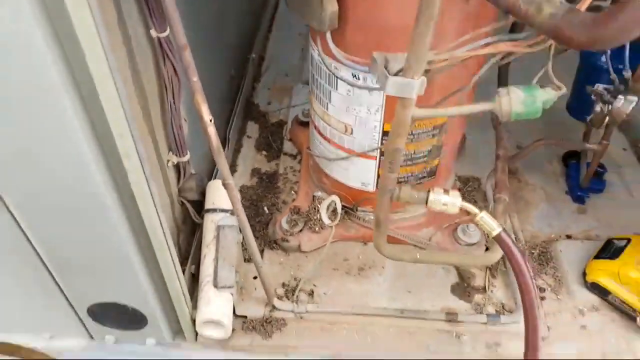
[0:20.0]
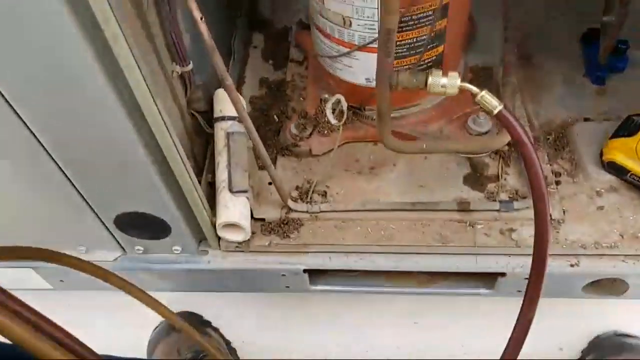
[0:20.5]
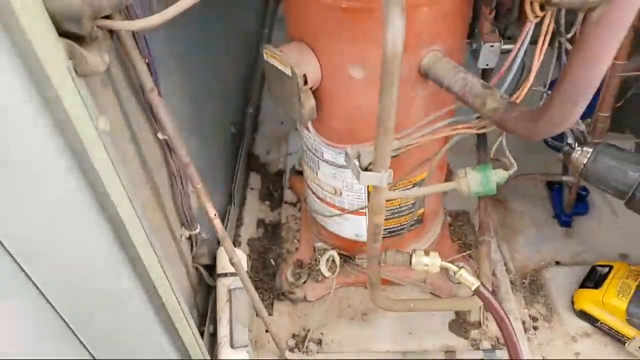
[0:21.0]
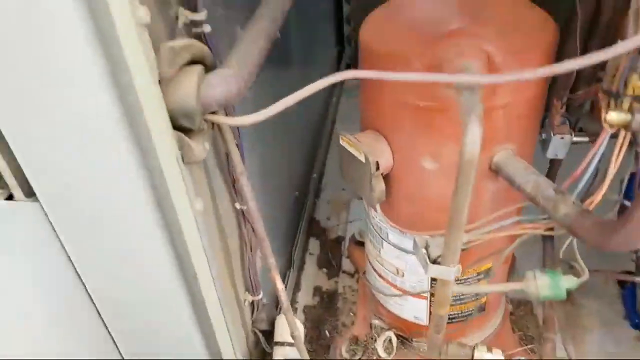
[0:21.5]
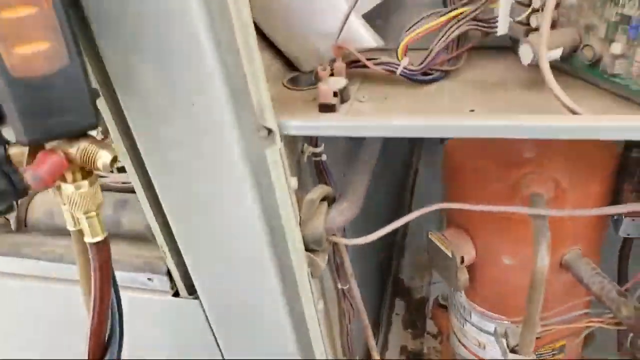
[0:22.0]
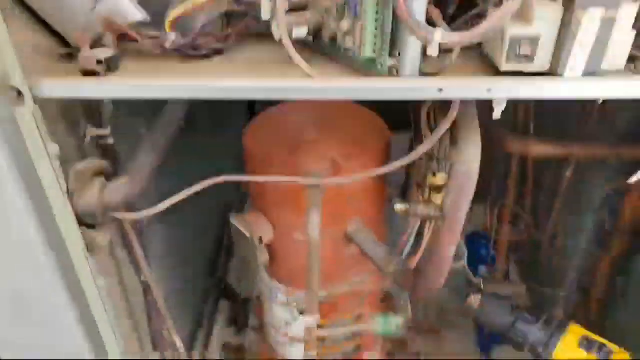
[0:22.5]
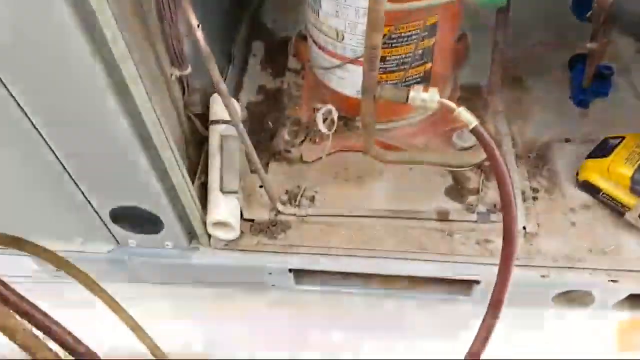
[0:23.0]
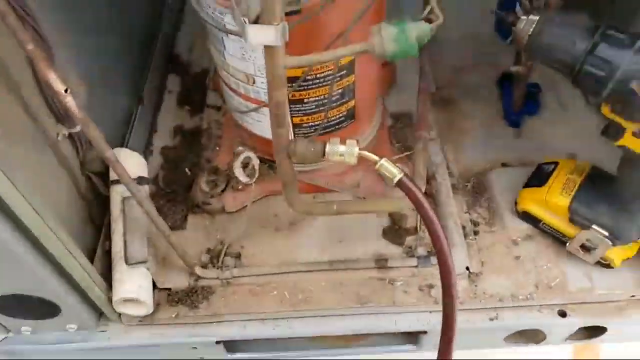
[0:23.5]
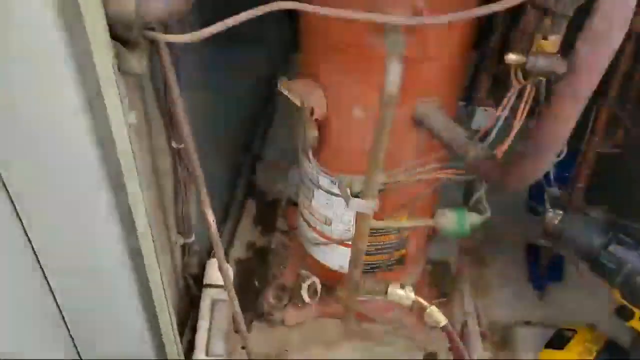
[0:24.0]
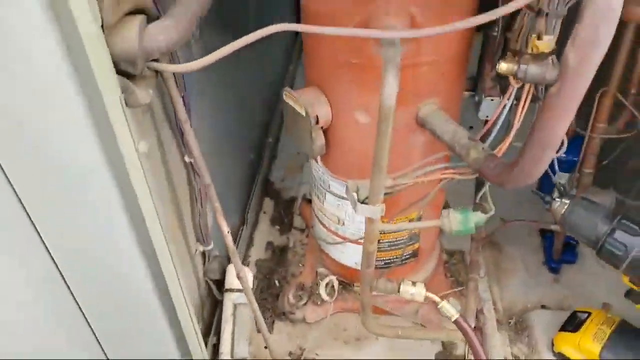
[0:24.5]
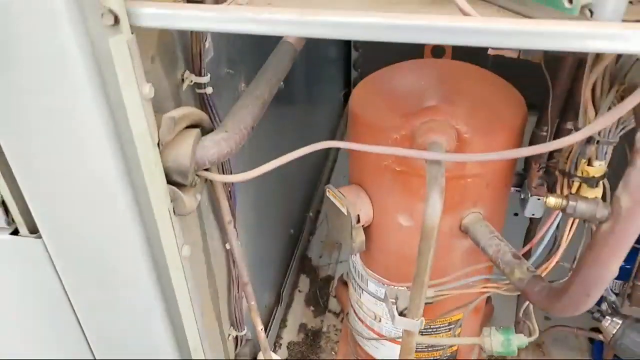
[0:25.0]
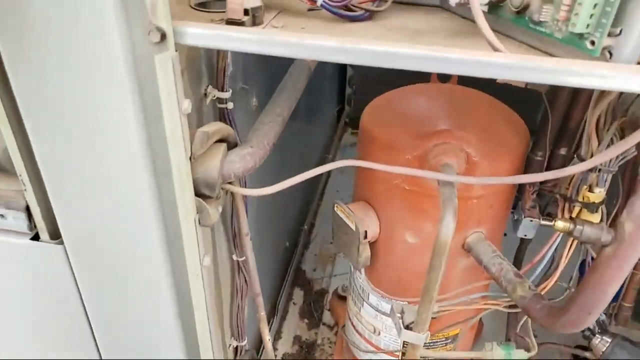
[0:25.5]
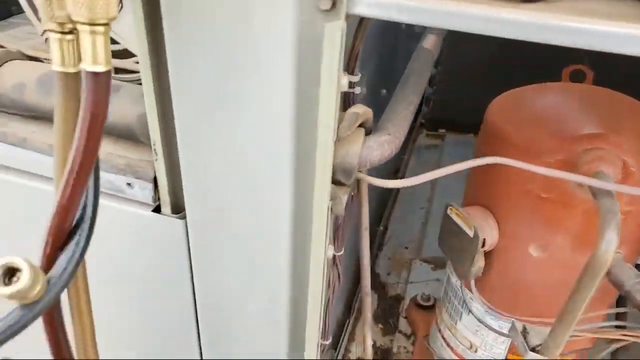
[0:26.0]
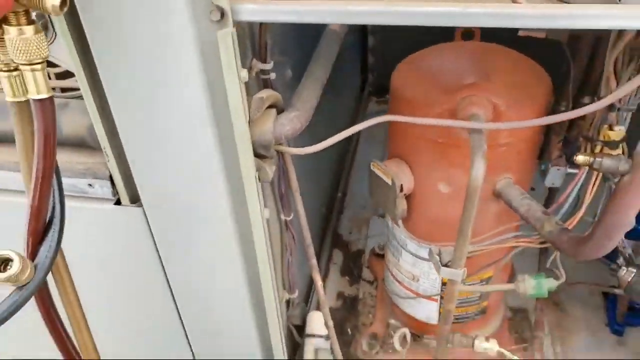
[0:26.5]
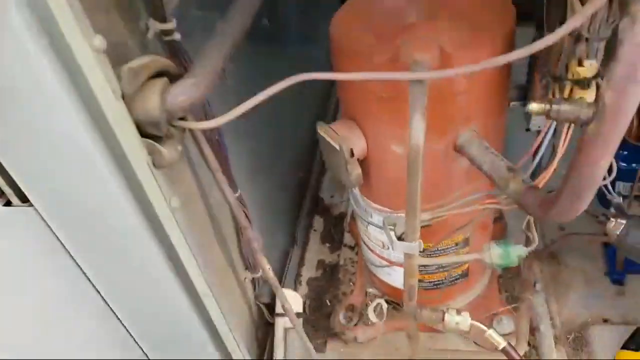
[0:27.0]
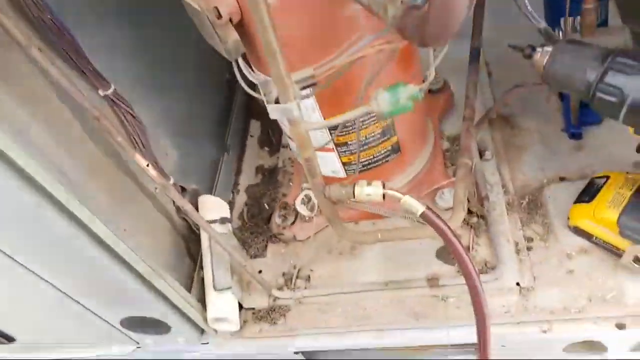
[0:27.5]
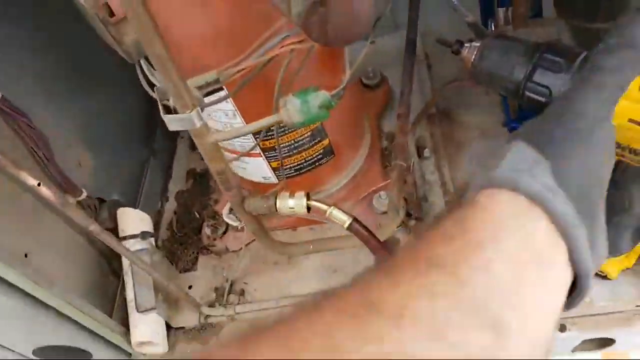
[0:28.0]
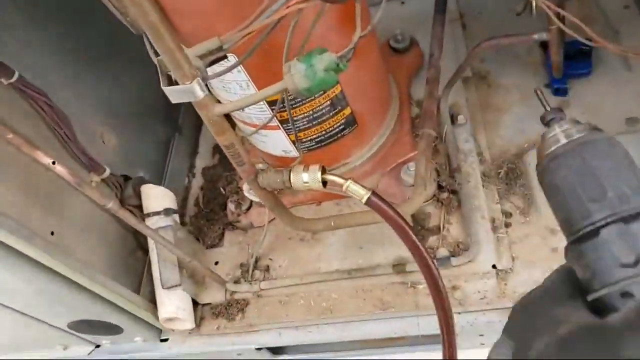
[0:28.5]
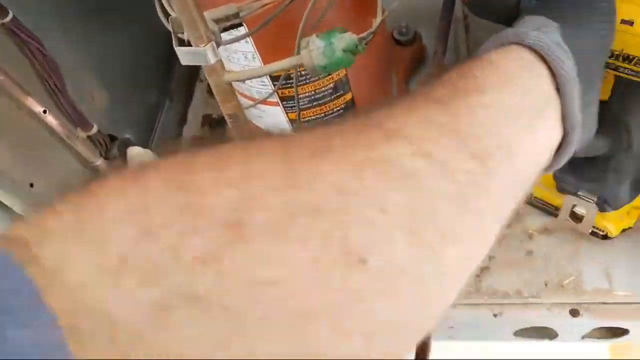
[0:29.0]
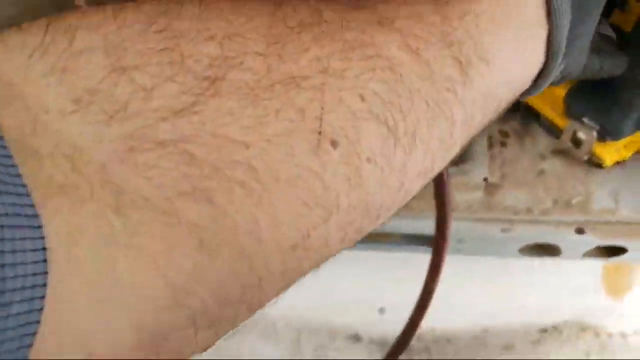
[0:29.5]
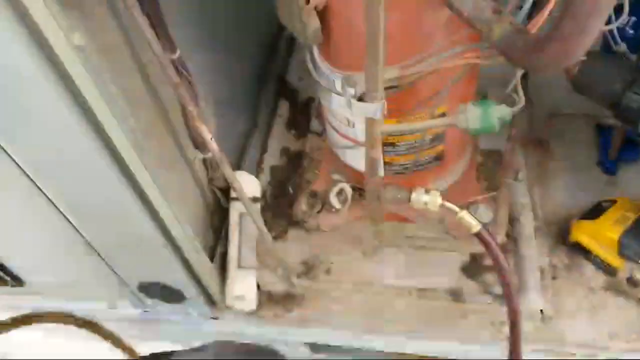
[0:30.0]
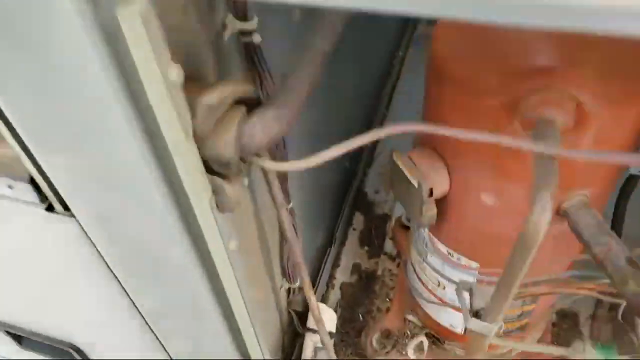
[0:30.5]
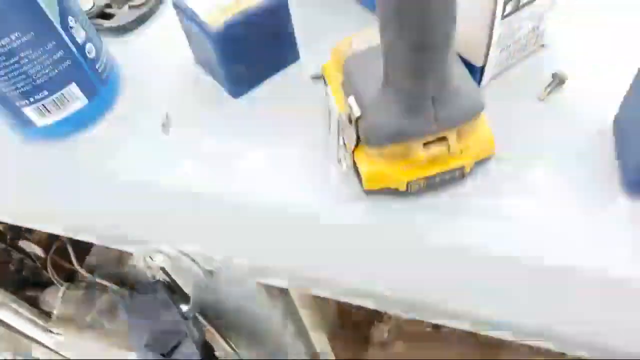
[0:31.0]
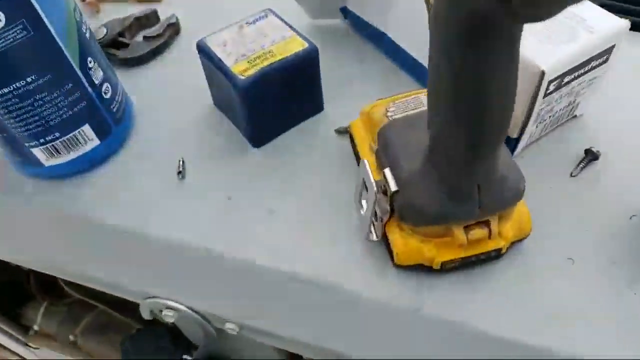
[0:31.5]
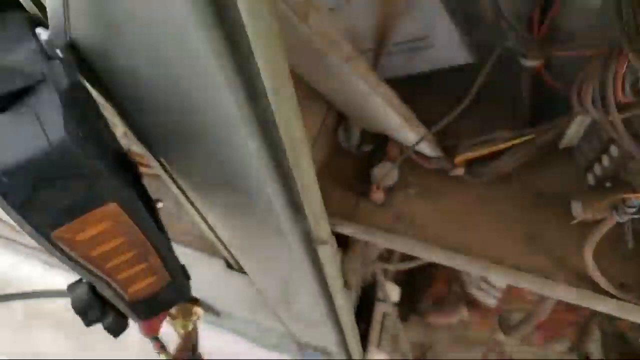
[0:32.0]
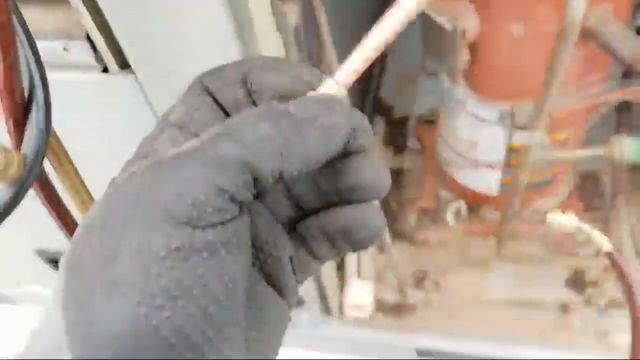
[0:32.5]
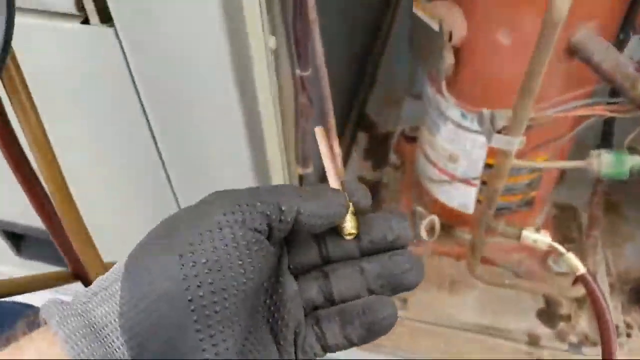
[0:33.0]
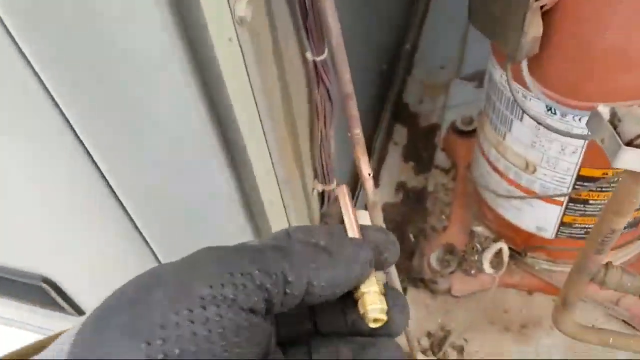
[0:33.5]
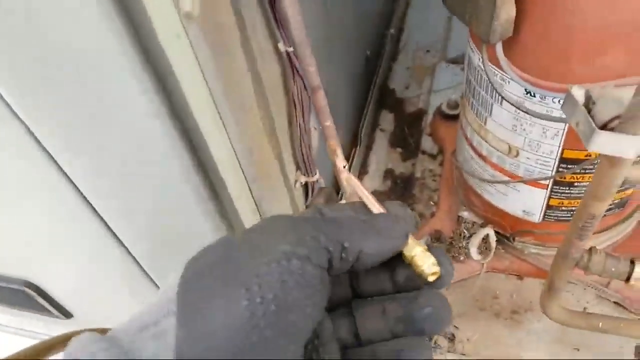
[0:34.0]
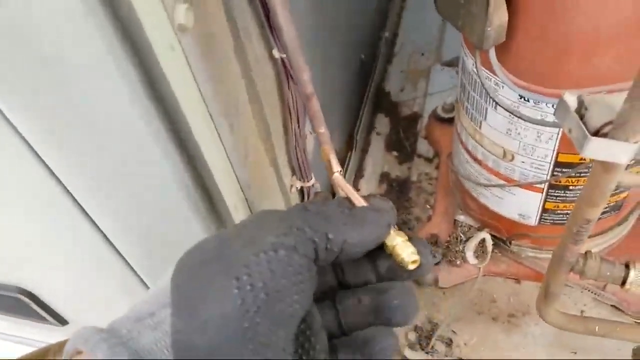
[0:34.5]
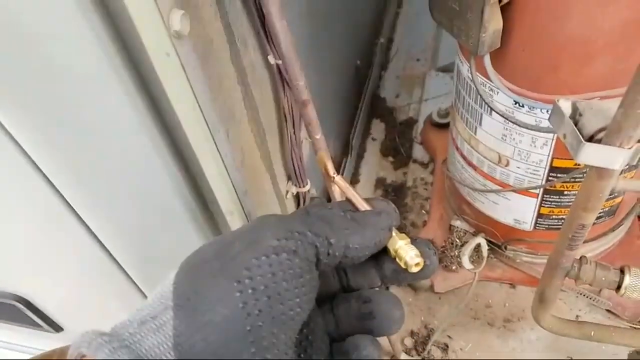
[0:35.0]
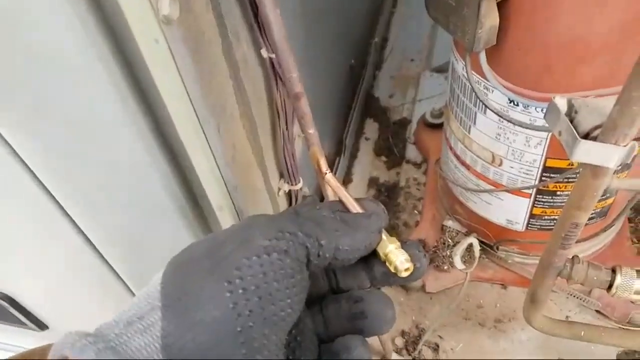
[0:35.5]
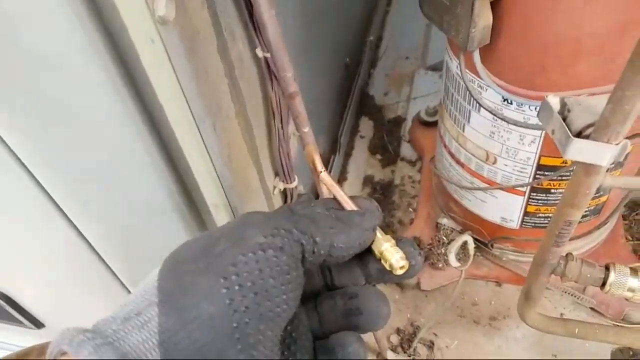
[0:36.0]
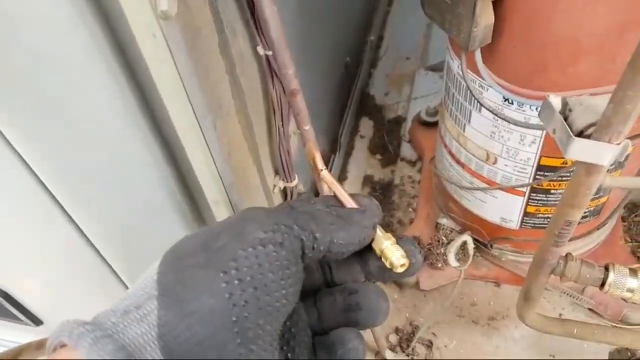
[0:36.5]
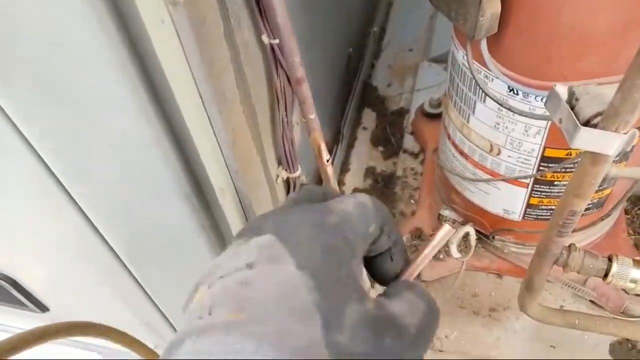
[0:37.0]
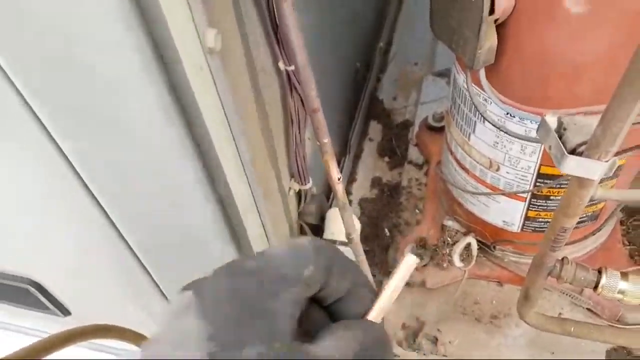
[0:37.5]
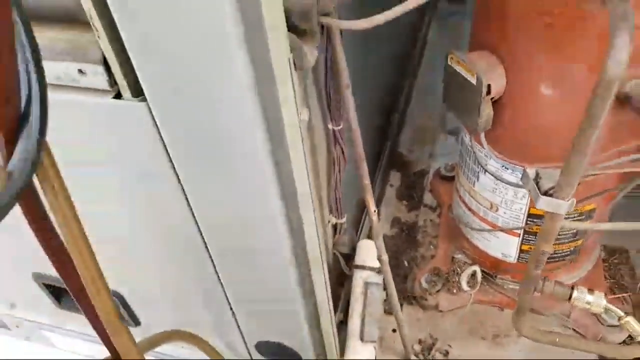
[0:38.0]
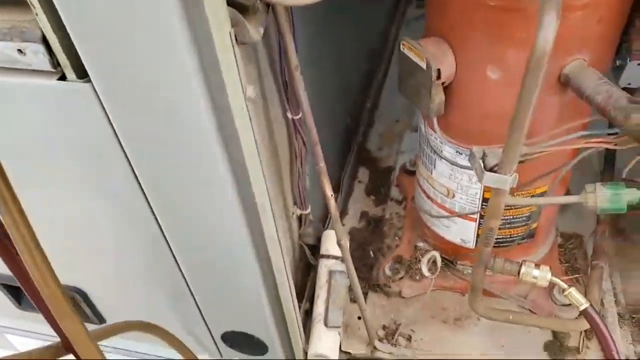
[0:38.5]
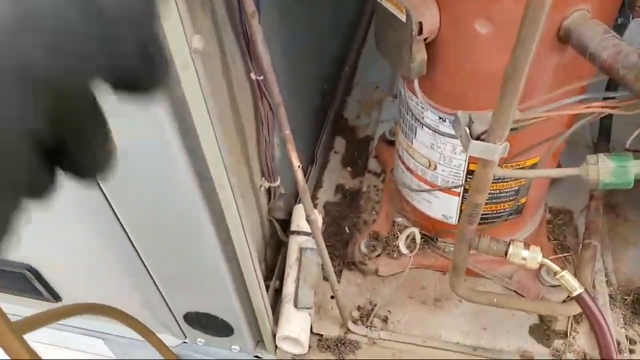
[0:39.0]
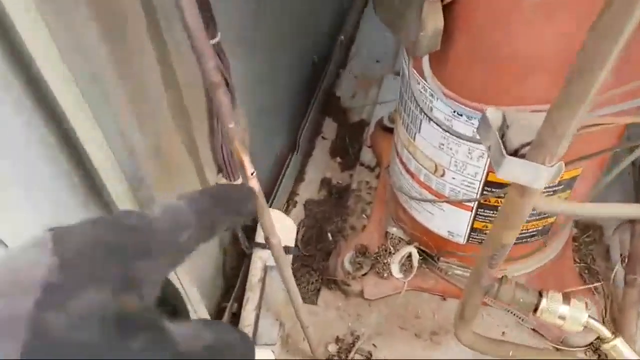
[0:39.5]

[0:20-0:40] The large orange cylinder container is still bolted to the floor. The video pans down, then pans up to what appears to be an electrical device on top of the orange cylinder. A yellow and black DeWalt battery-operated drill is still on the floor to the right. The video pans shakily to the left, showing two hoses with copper fittings attached. The left gloved hand reaches out and grabs the drill, picks it up, and places it back down. The video pans upward, giving an aerial view of the blue square spin container, with another DeWalt battery-operated drill sitting next to it. The video pans down. The black-gloved left hand now has a small copper piece with a copper fitting, and the hand puts the piece in place, touching it to the small hole in the copper pipe.